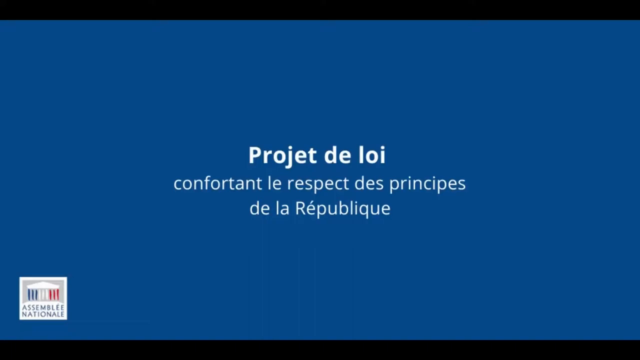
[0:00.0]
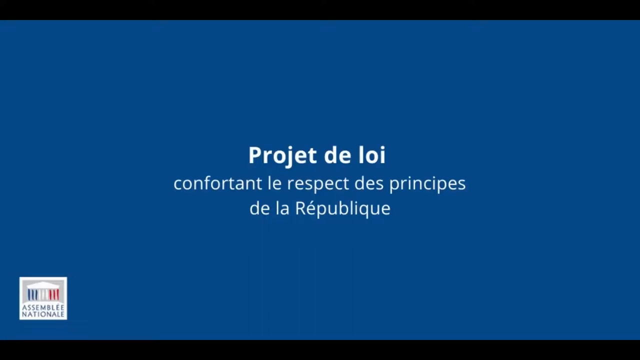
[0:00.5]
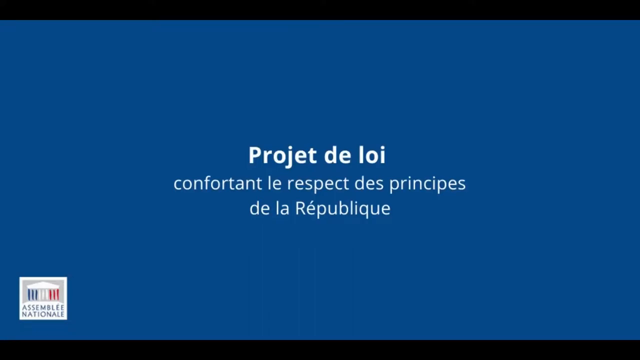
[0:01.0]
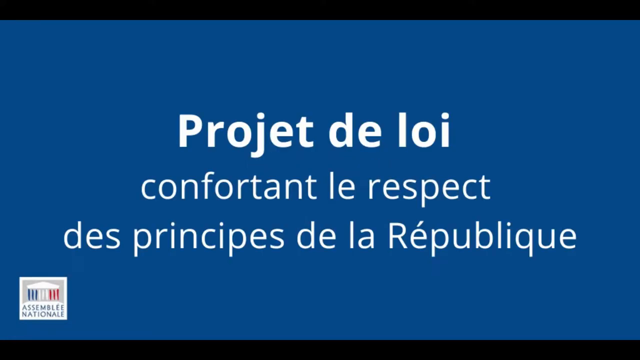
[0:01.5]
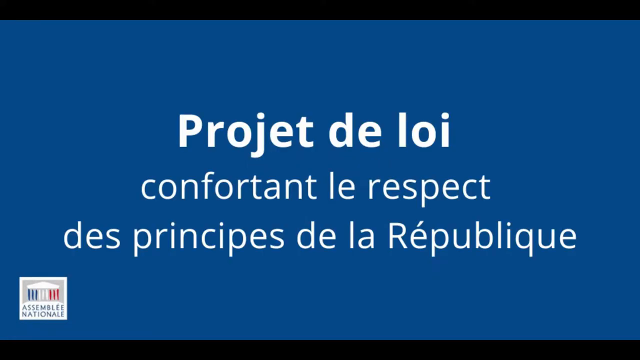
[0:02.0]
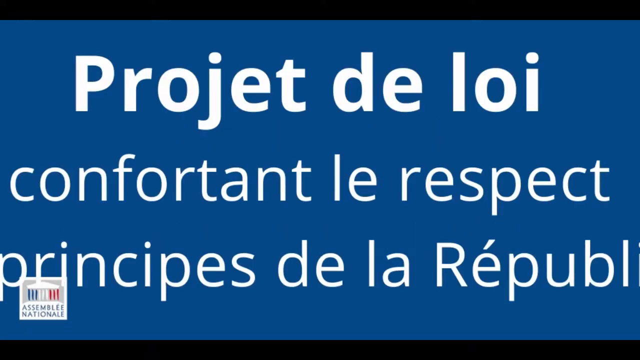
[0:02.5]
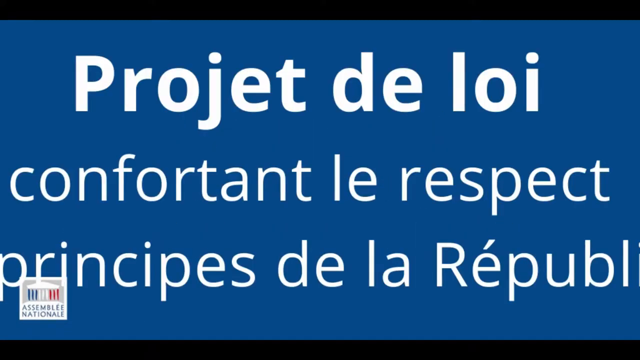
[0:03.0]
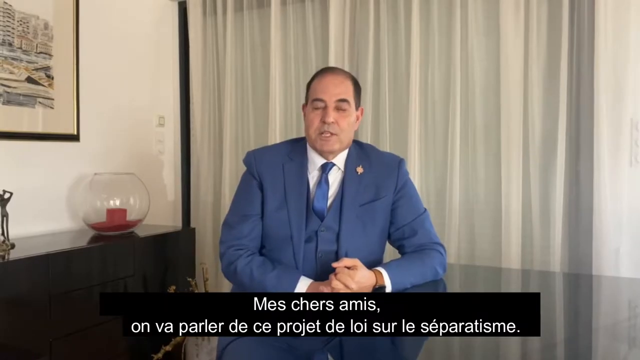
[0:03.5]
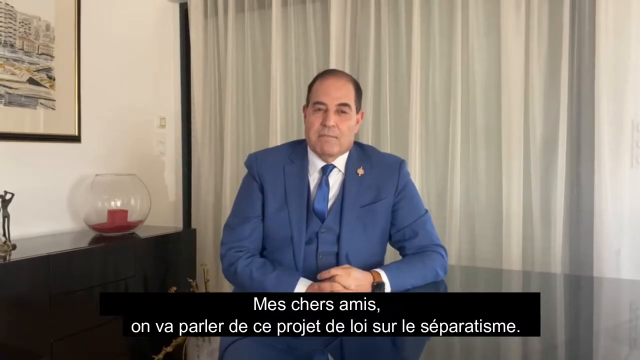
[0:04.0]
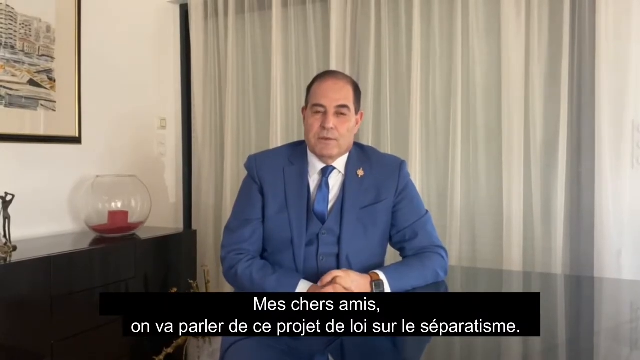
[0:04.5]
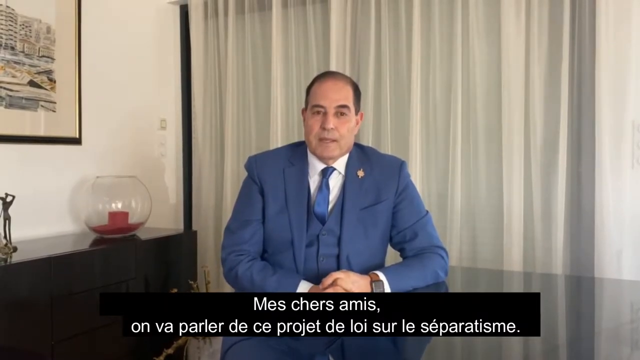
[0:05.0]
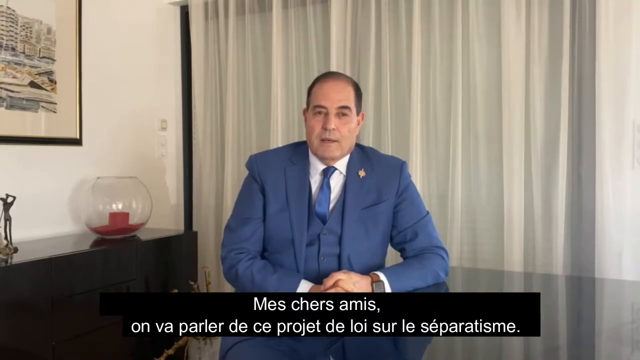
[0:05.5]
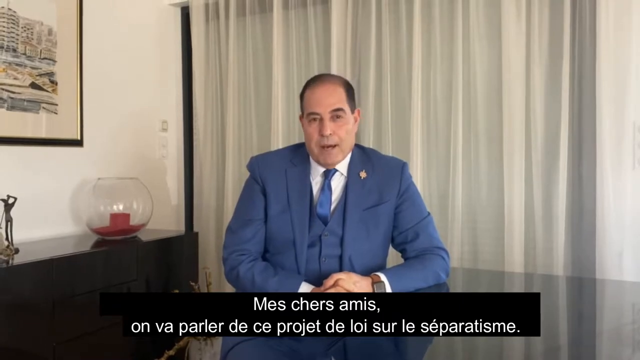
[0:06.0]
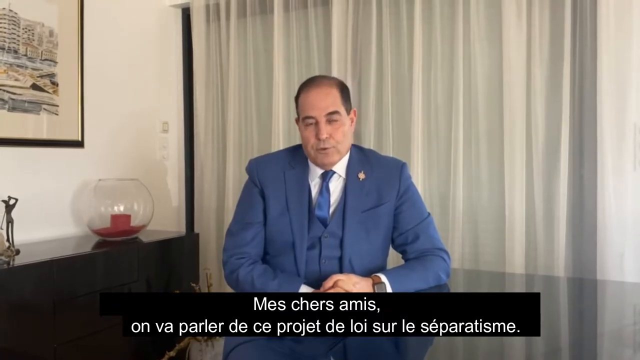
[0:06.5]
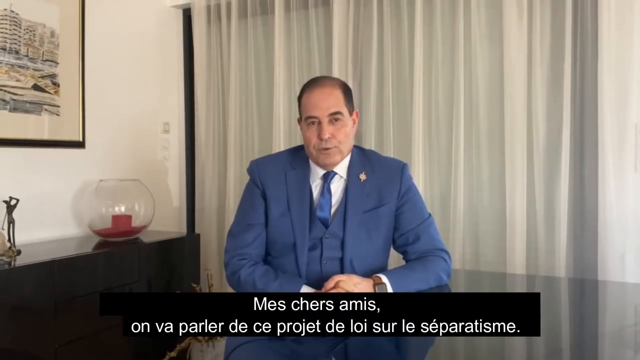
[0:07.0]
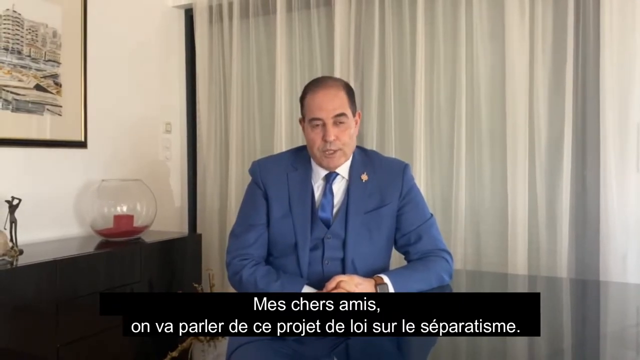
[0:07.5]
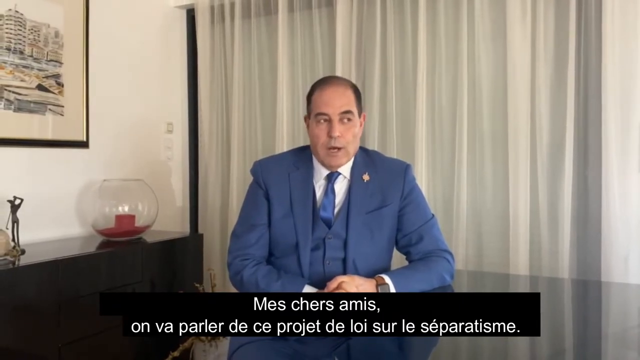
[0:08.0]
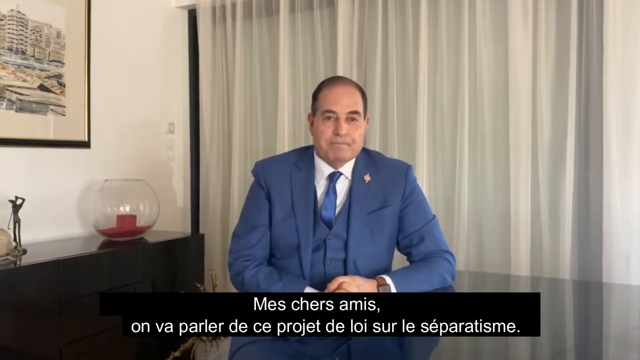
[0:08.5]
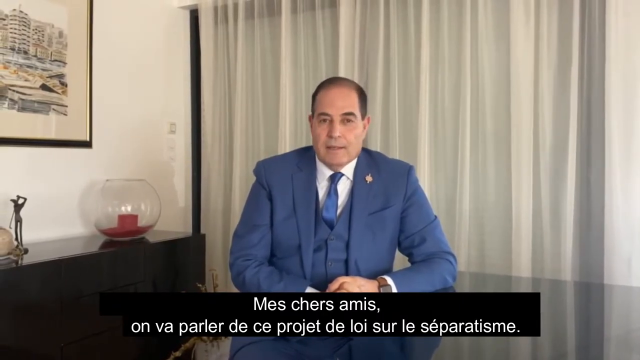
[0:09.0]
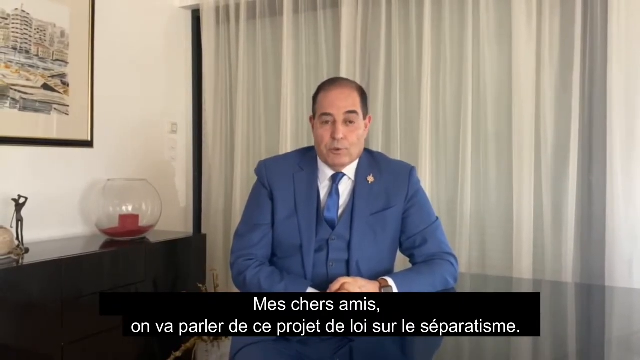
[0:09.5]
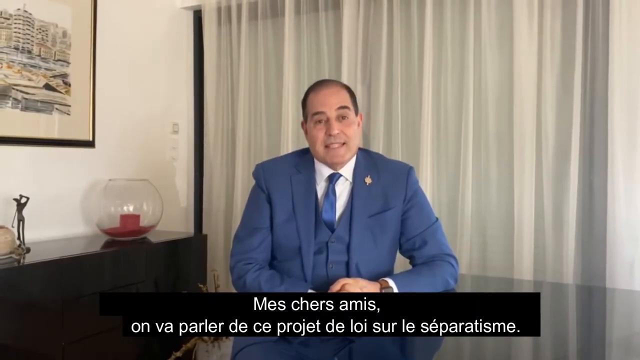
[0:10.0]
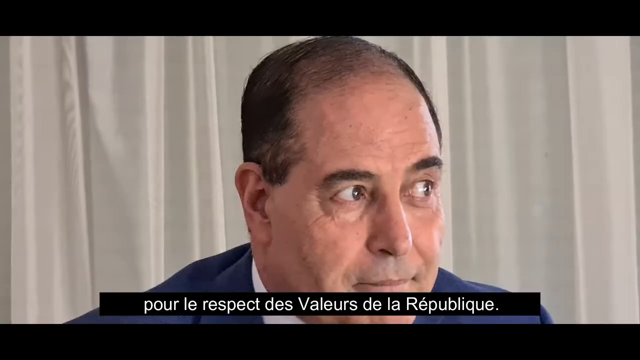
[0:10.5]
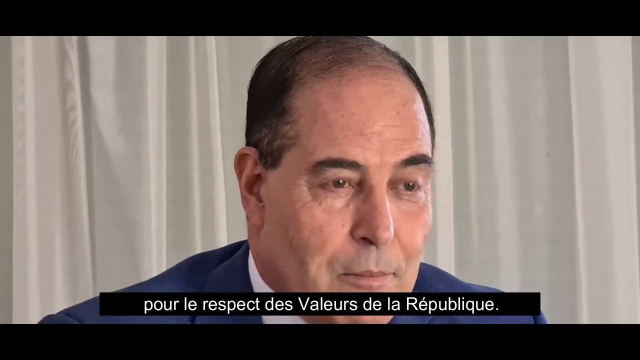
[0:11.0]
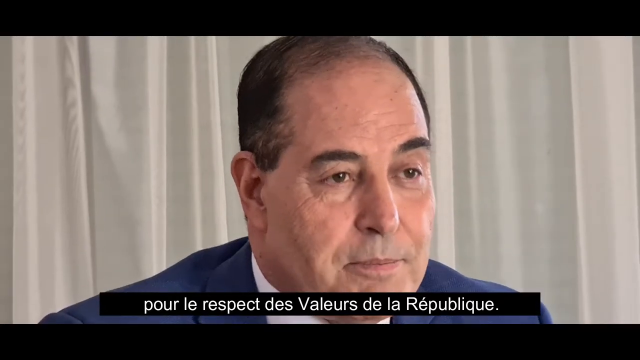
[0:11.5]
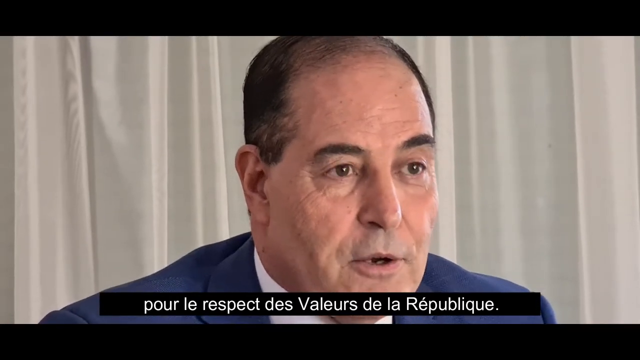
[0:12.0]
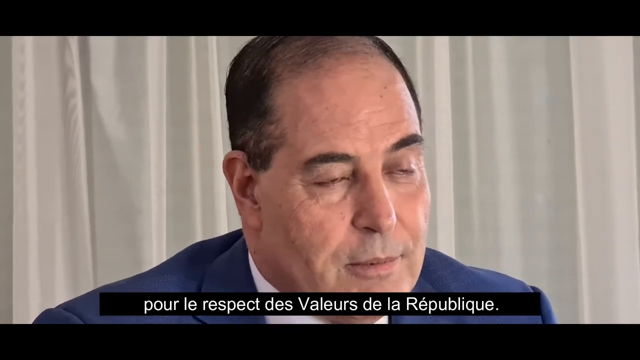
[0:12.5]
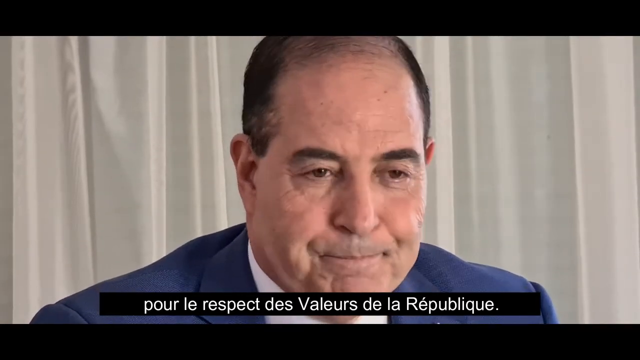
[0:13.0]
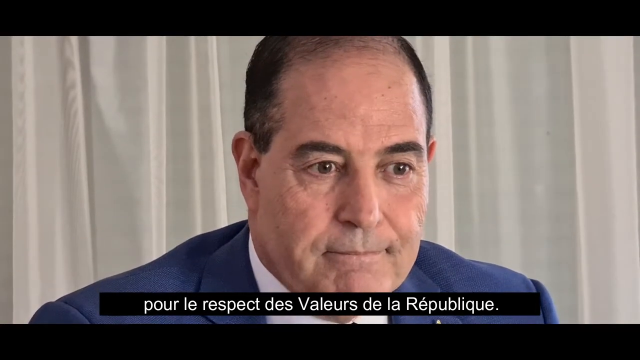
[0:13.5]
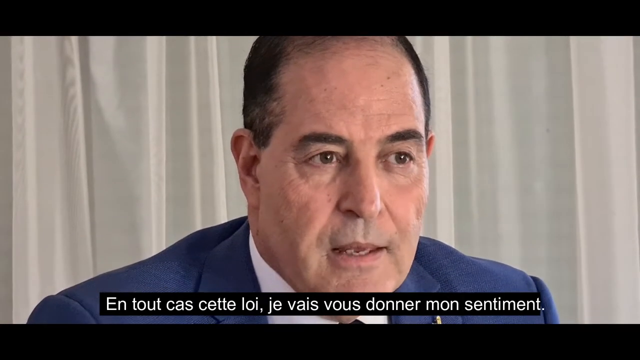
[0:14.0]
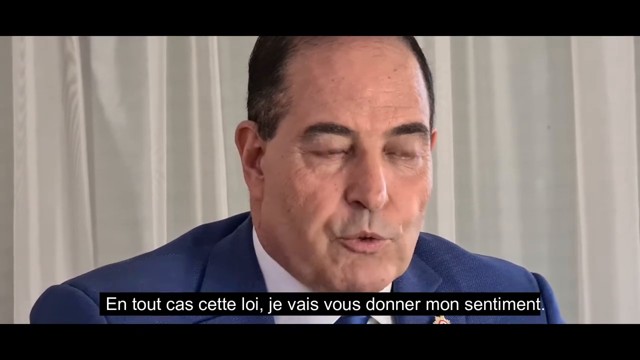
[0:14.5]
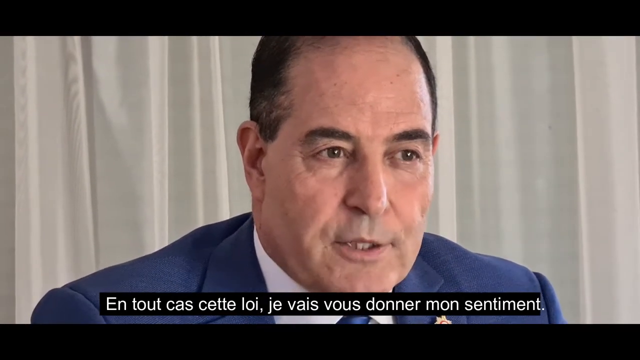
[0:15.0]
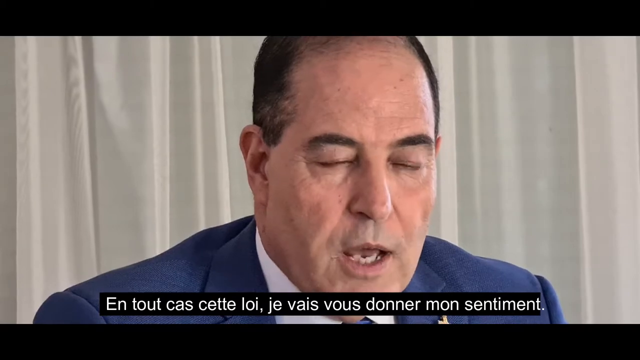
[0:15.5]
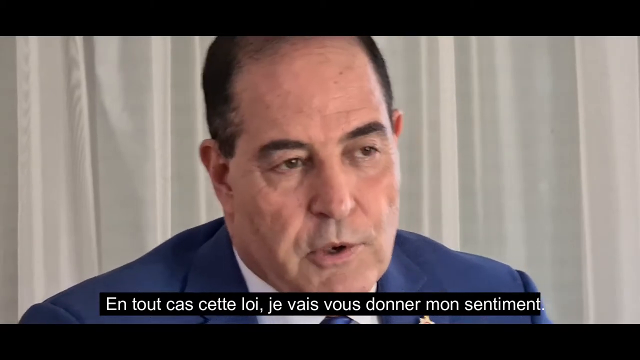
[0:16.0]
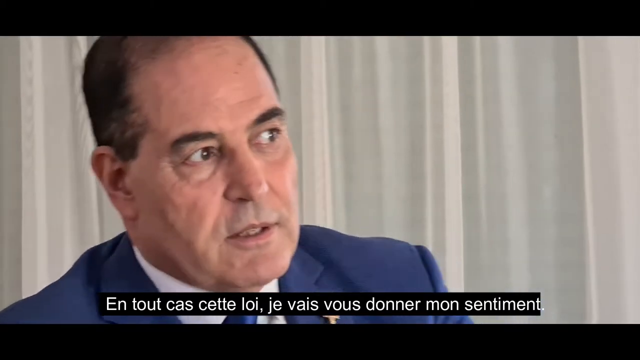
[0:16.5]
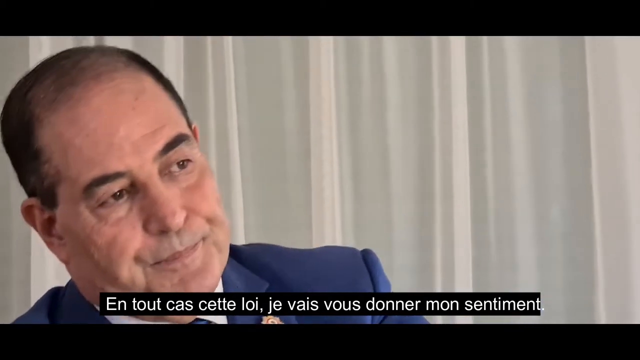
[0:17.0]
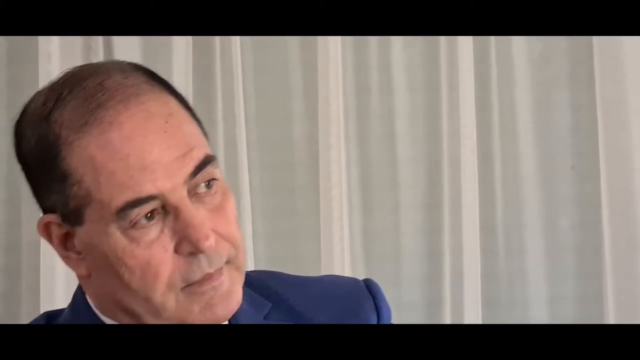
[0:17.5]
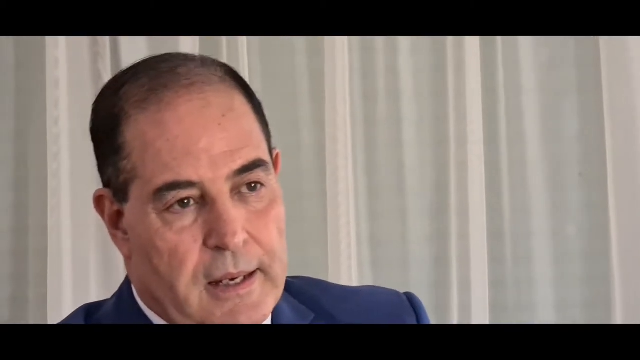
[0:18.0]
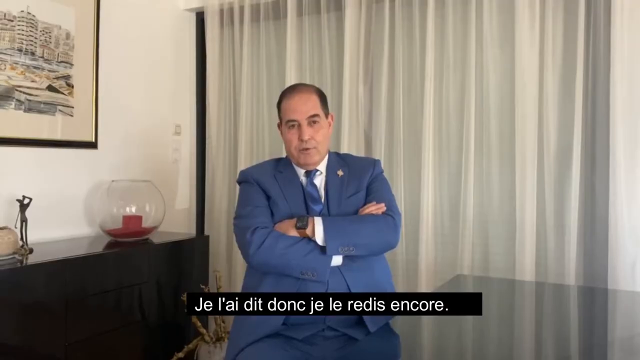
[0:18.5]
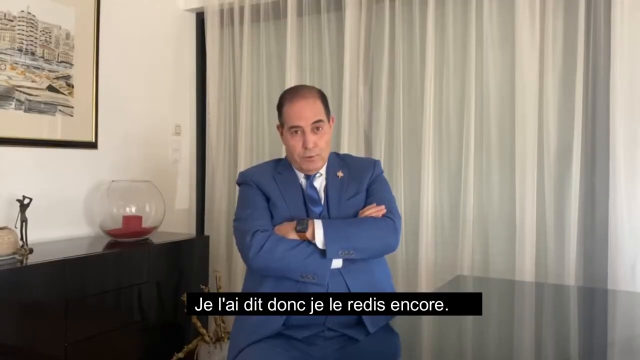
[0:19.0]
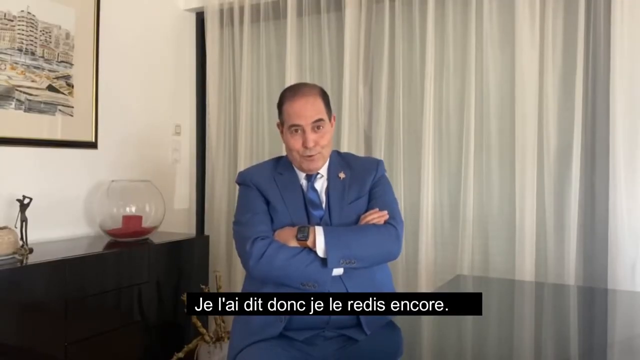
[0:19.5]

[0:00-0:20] A man with short black hair, who is old, sits facing the camera and talks. He wears a blue suit, a blue vest, a blue tie and a white collared shirt, with a watch on his left wrist and a lapel or pin attached to the right side of his suit. He looks at the camera while talking, with his left arm placed on a table. The view zooms in close to his face as he keeps talking and looking forward, though because of the camera angle he appears to be looking toward the right. He then talks with his arms crossed. The screen turns all blue, with white captions in a foreign language in the center.